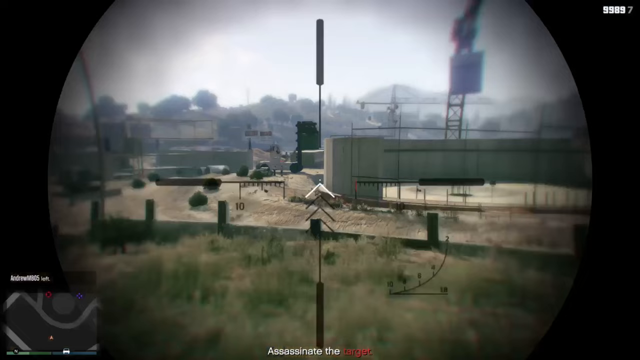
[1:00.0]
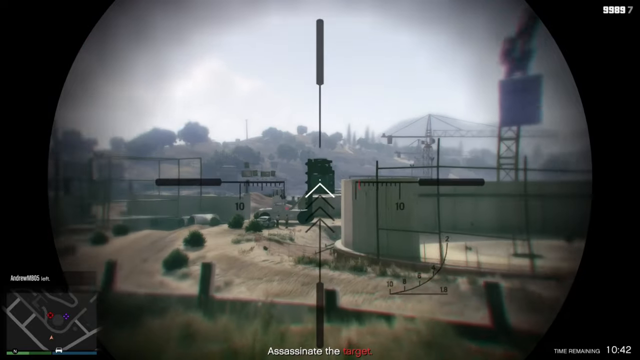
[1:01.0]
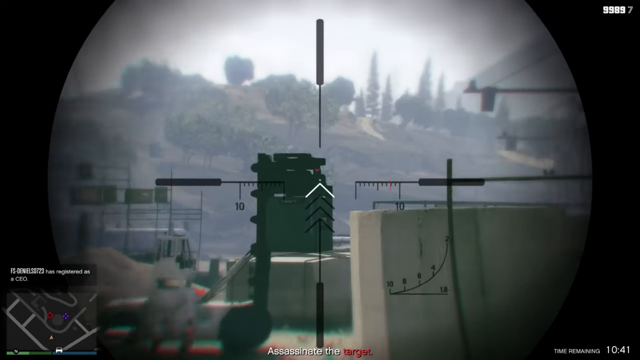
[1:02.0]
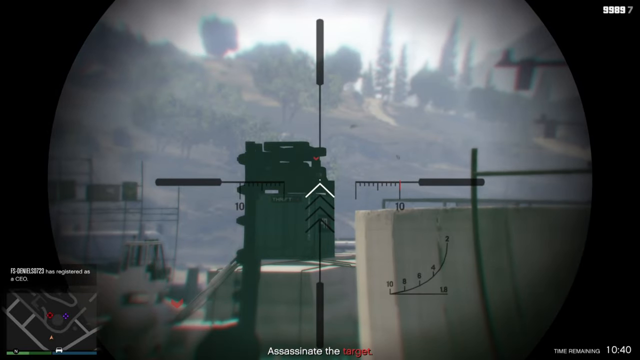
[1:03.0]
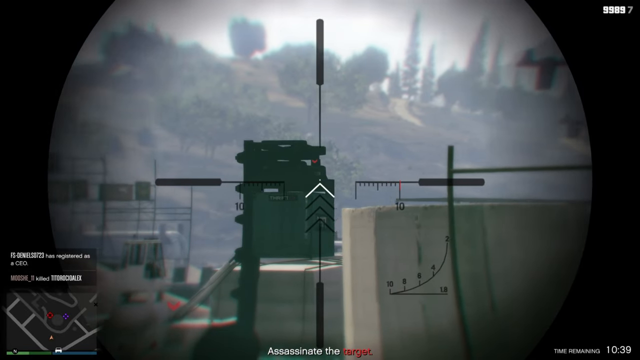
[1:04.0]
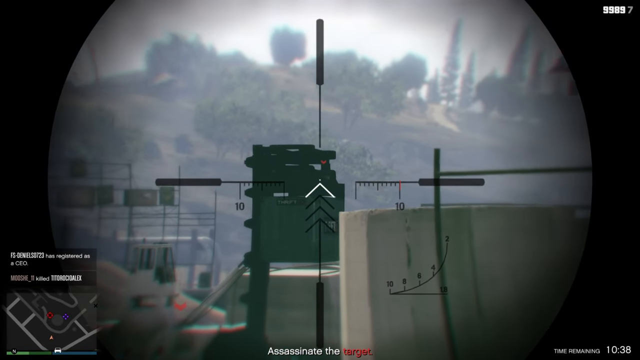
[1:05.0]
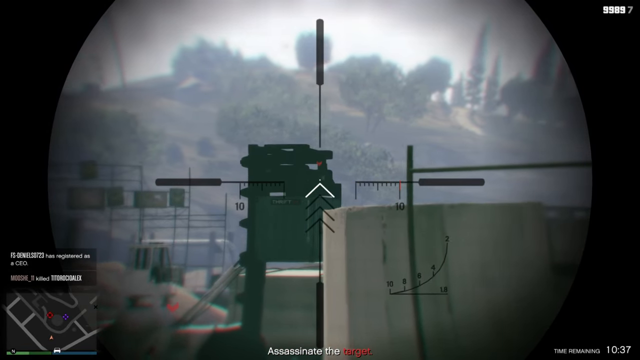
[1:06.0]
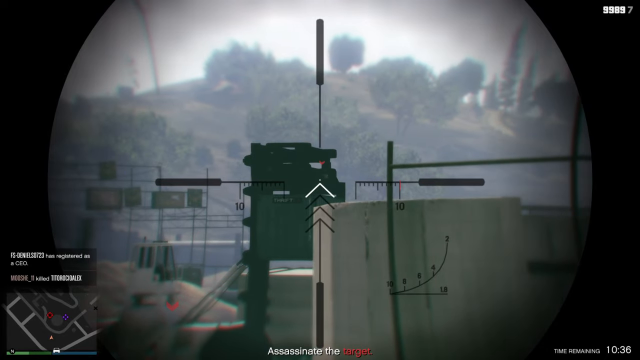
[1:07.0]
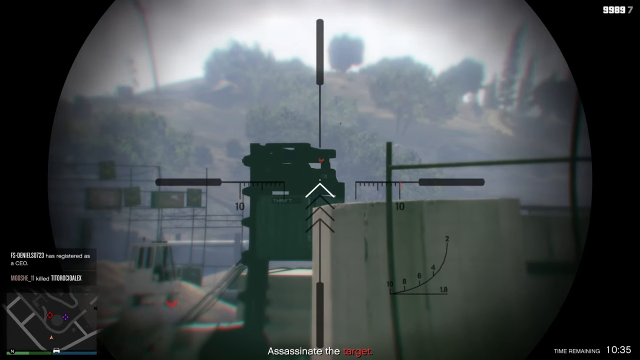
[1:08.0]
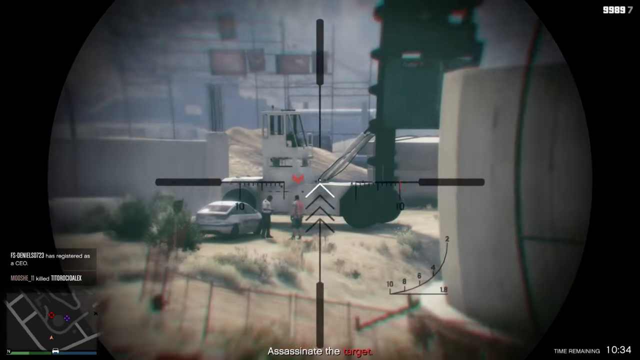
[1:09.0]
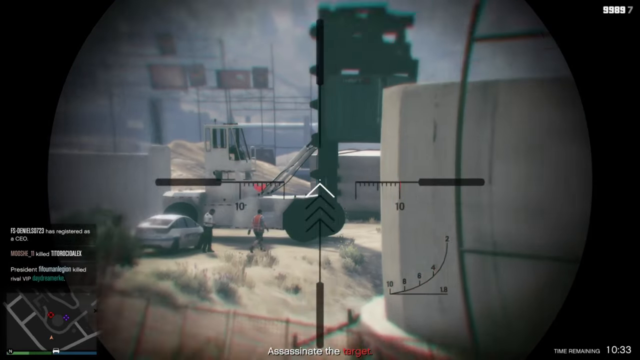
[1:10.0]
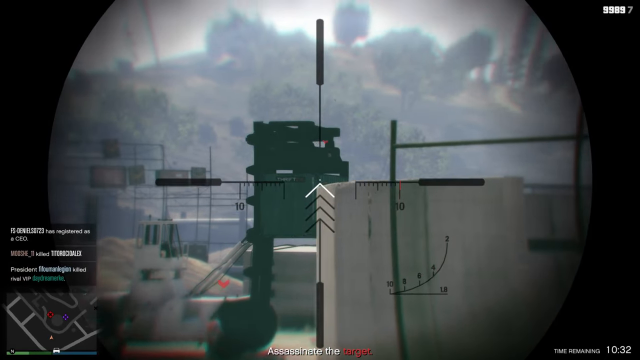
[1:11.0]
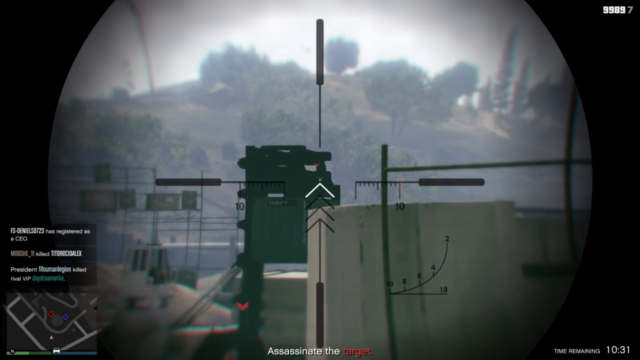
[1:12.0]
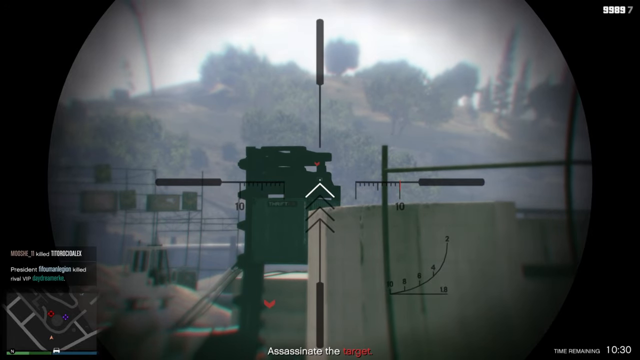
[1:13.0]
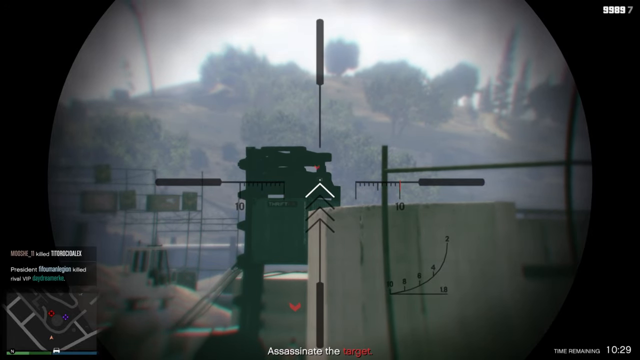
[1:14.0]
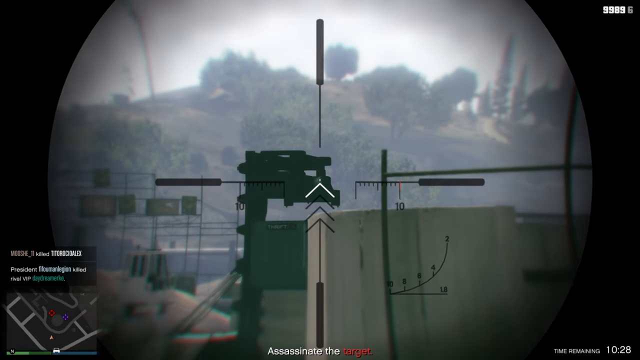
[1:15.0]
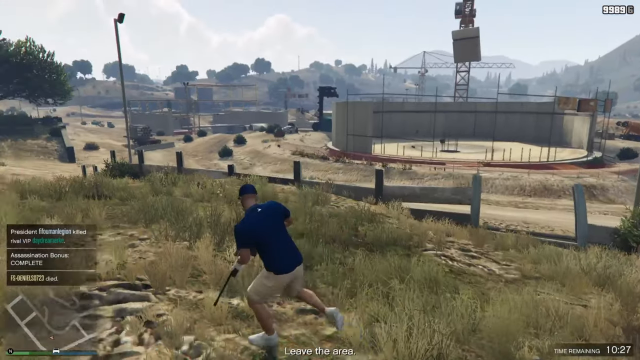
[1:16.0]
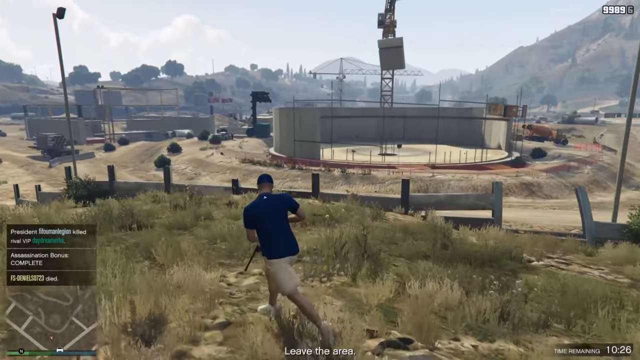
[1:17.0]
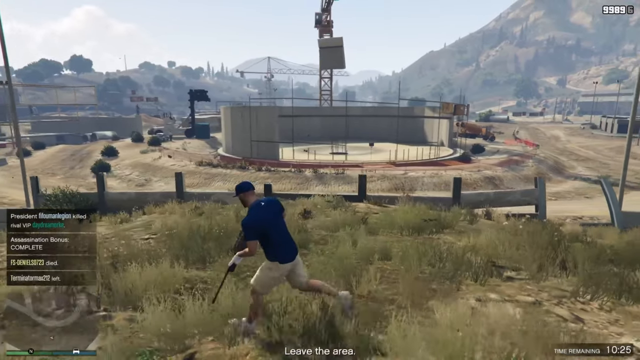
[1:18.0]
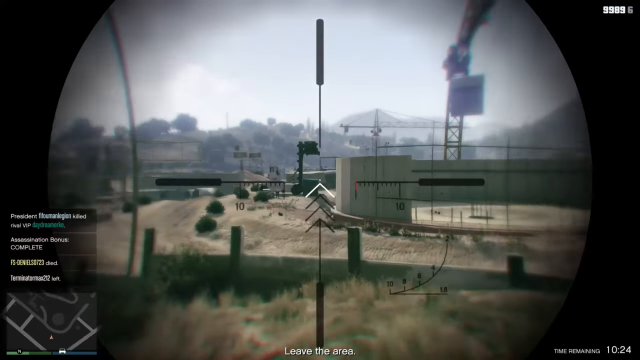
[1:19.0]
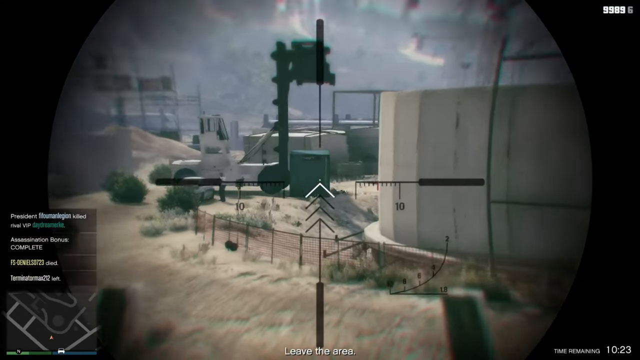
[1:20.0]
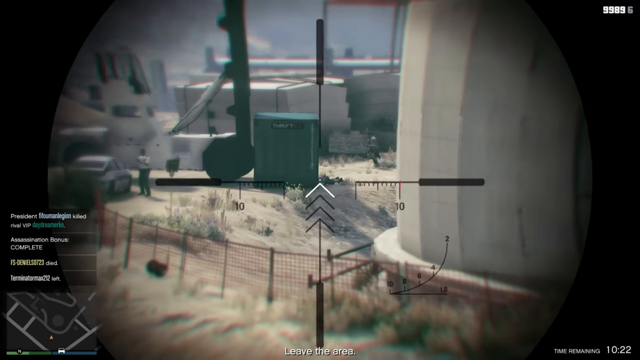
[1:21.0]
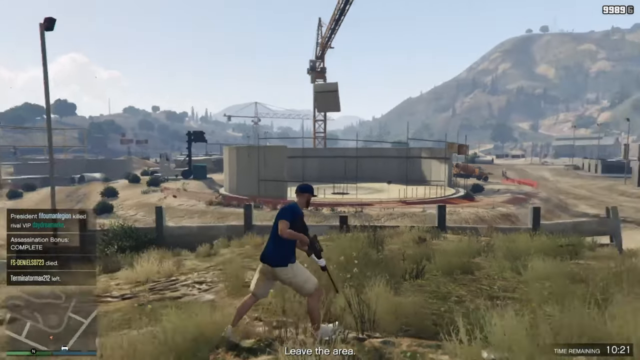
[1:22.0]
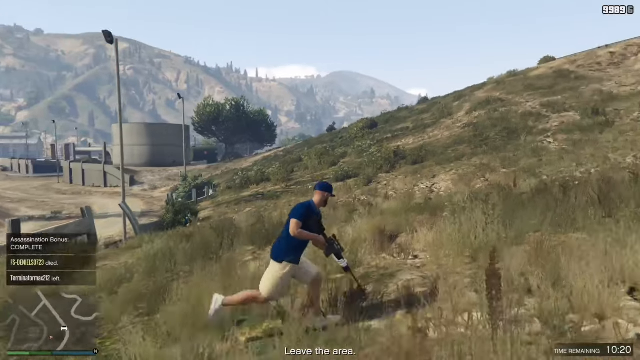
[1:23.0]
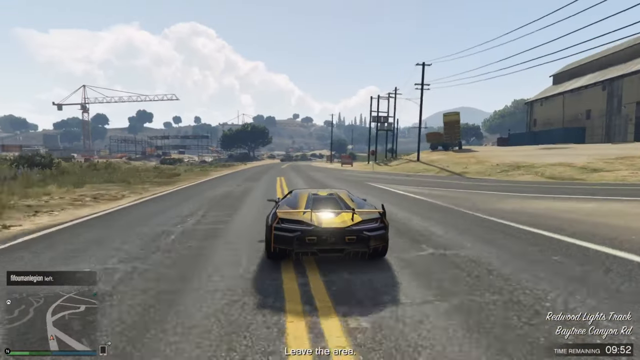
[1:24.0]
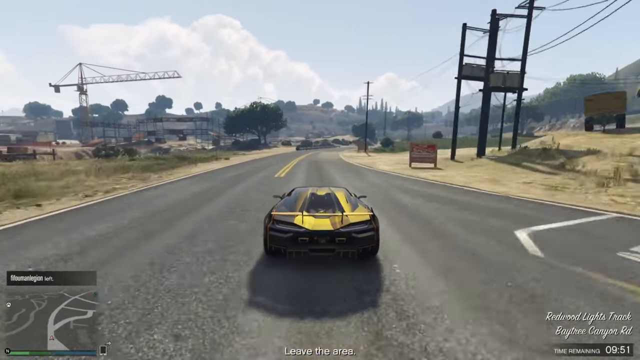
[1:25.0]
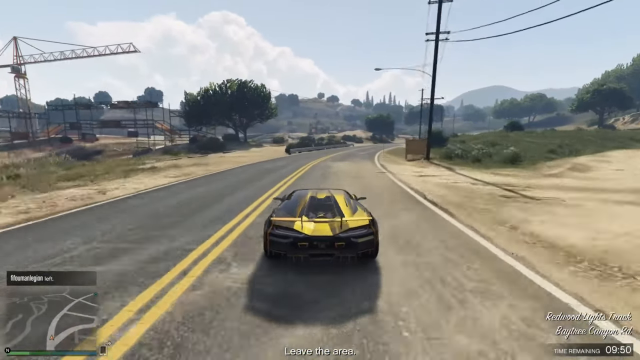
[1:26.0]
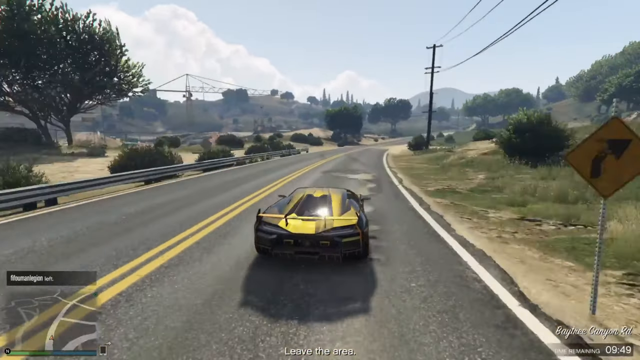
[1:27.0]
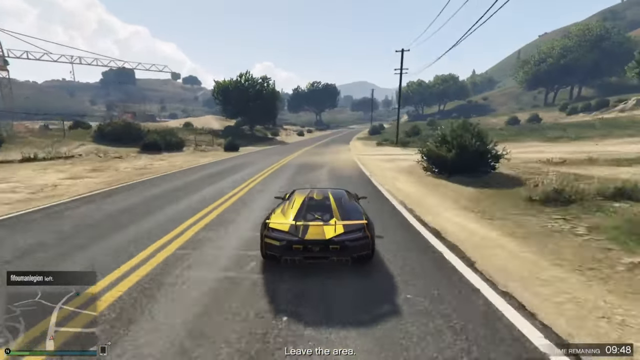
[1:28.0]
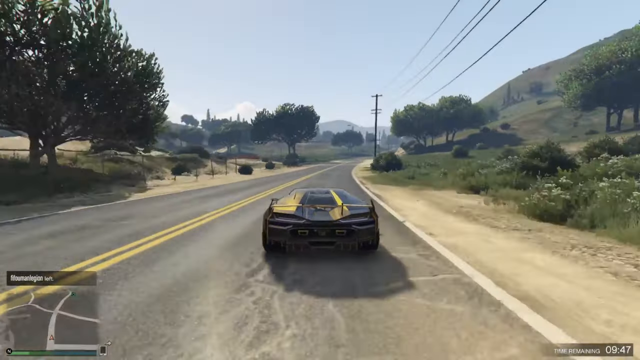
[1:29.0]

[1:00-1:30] The scene is in the sniper point of view, a sort of scoped view. In the middle is a white sort of arrow pointing upwards, and on the left, right, top, and bottom are sort of black lines. The scope zooms in on an area where a person has a red arrow pointing toward them. The camera focuses on them, then zooms down to the left, showing two people standing next to a white vehicle, along with a large construction vehicle. One of these people has a red arrow next to them, while the other, who appears to be a normal civilian, does not. The view goes back to the person at the very top; the scope focuses on them and they are shot, apparently killing the target. The view zooms in around that area again, where people are panicked and running around. The scene then changes back to the car driving on the road, getting away. At the very bottom, white text says "leave the area," and at the very end a big pop-up says "hit complete."